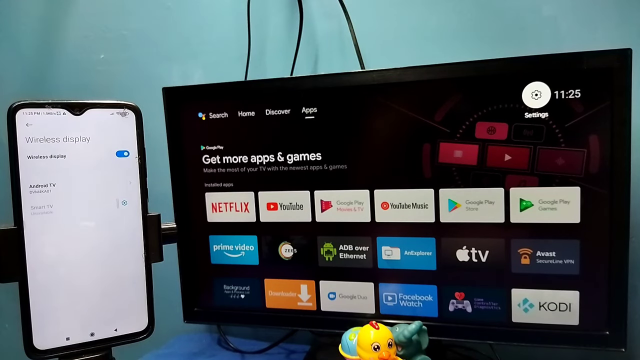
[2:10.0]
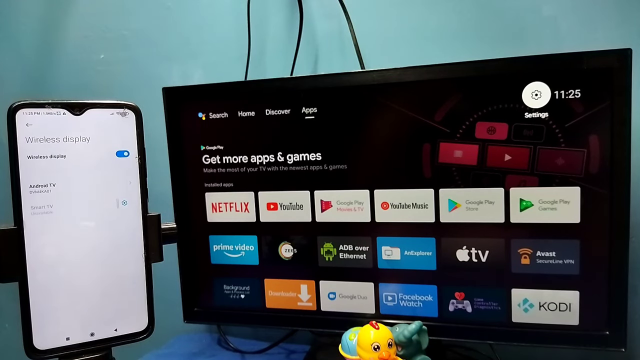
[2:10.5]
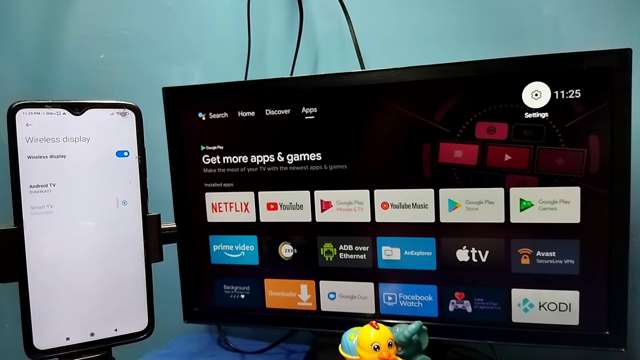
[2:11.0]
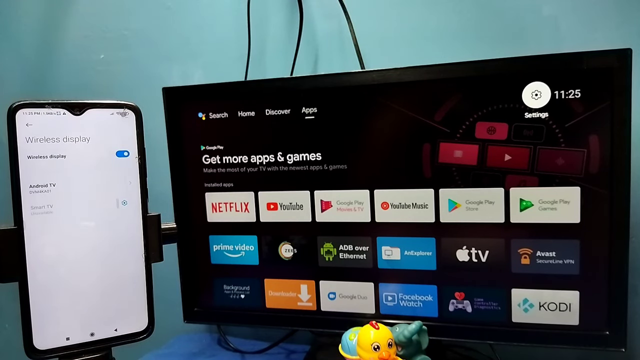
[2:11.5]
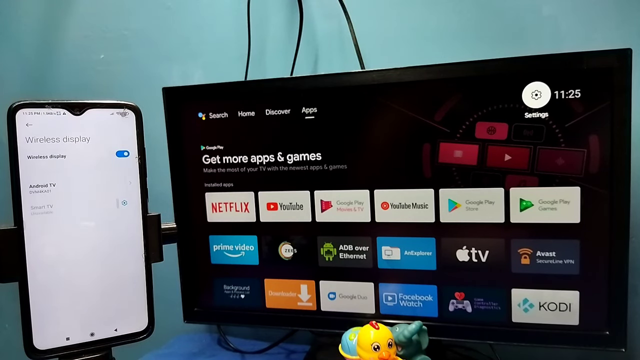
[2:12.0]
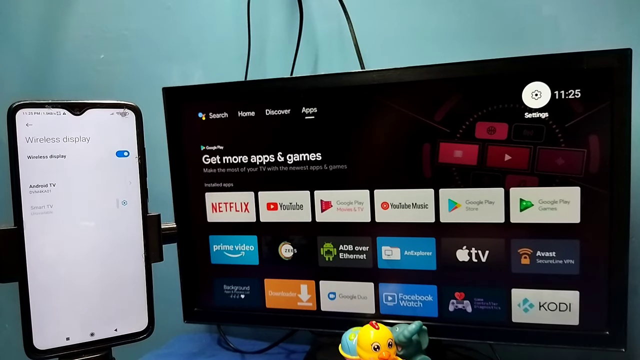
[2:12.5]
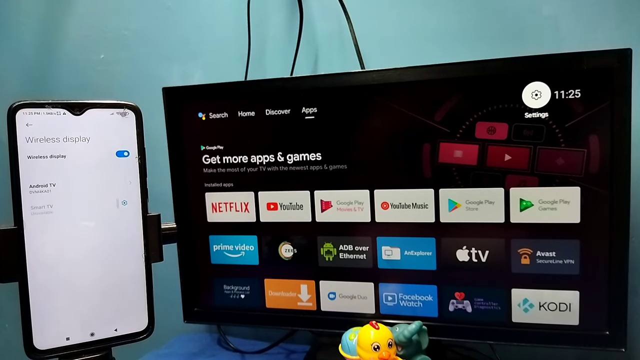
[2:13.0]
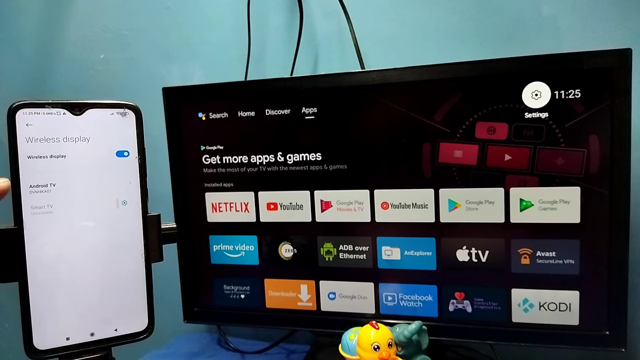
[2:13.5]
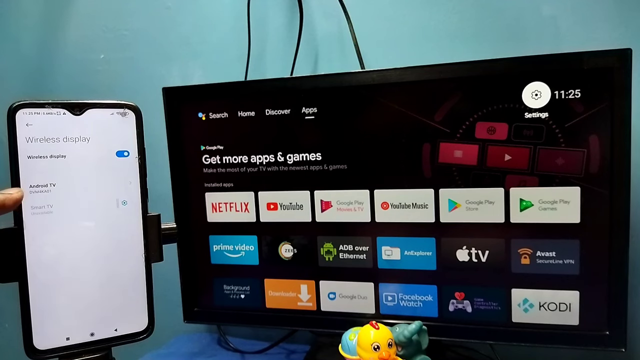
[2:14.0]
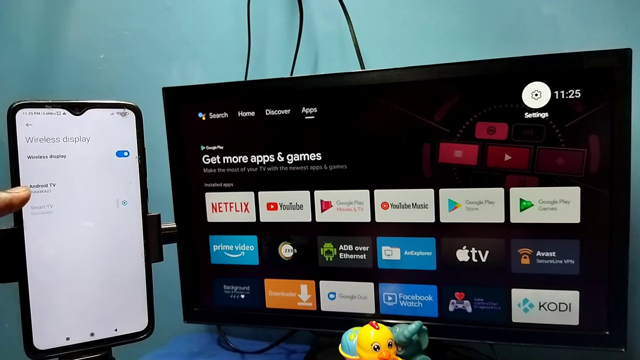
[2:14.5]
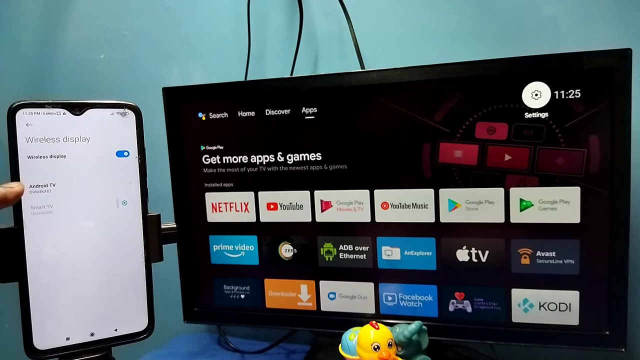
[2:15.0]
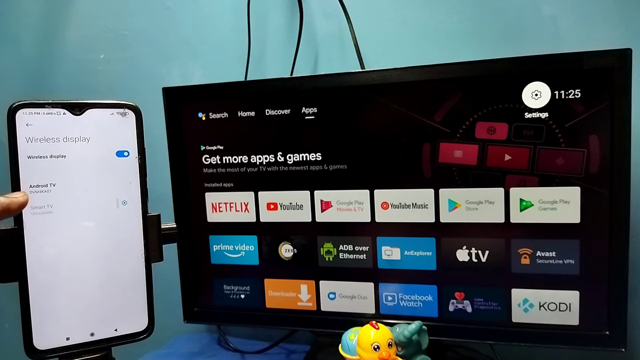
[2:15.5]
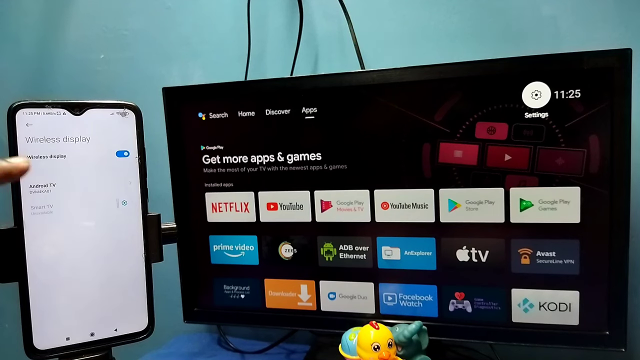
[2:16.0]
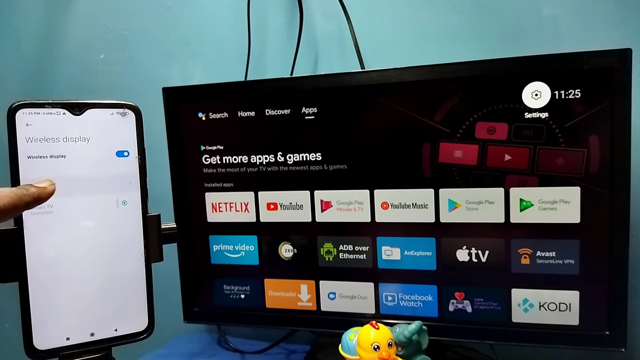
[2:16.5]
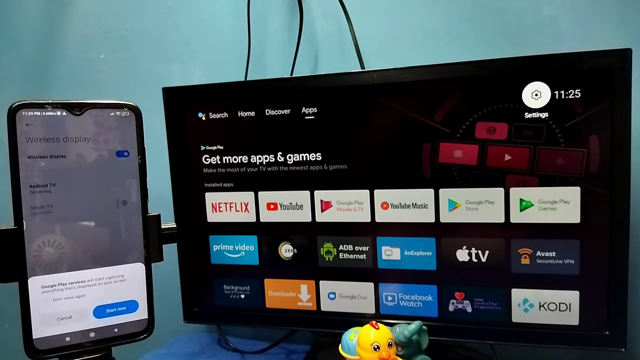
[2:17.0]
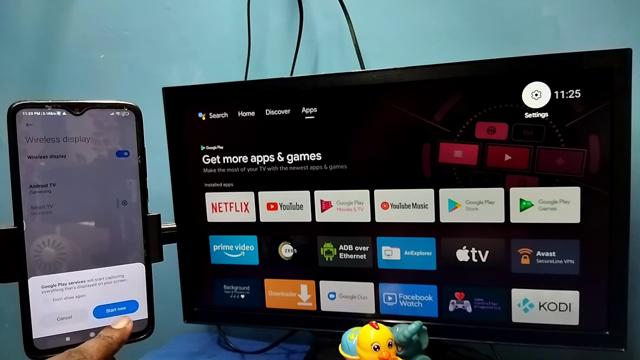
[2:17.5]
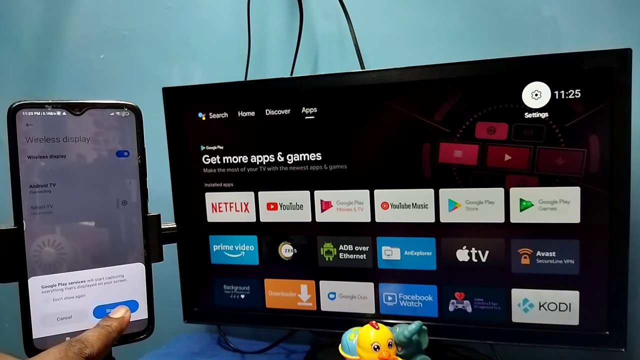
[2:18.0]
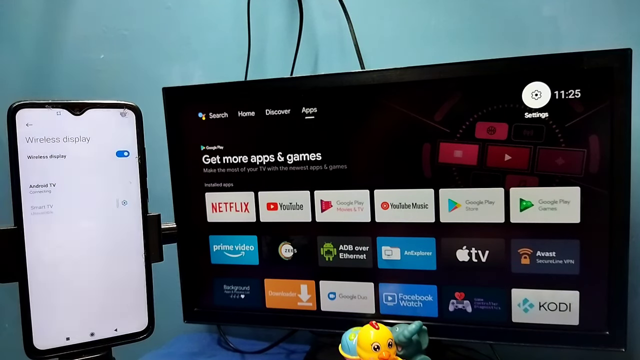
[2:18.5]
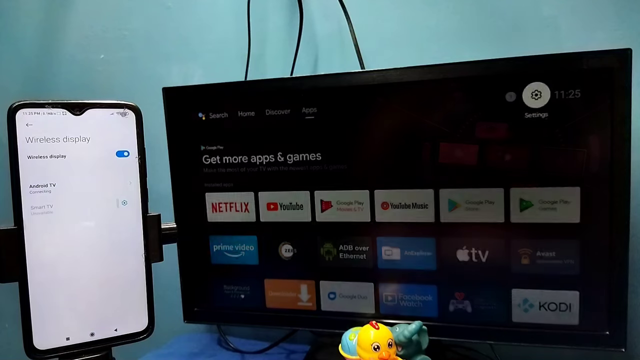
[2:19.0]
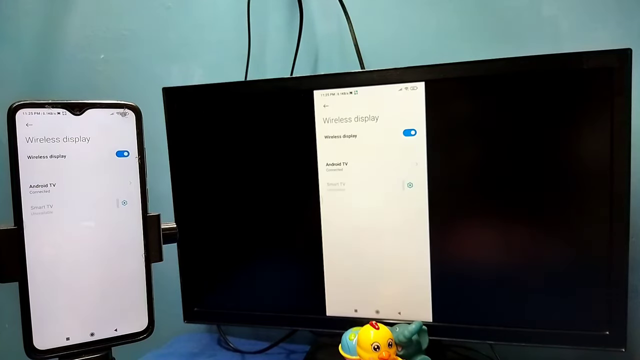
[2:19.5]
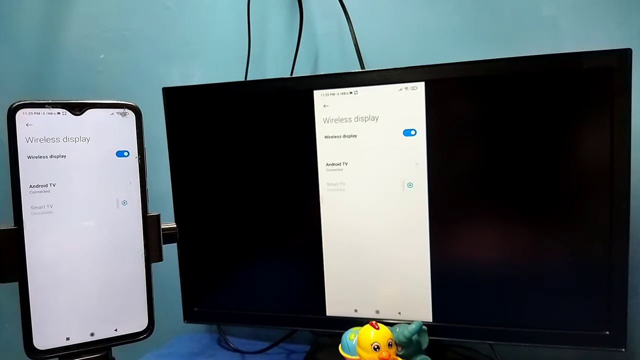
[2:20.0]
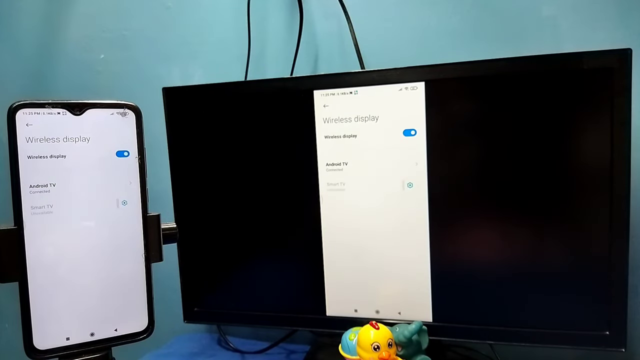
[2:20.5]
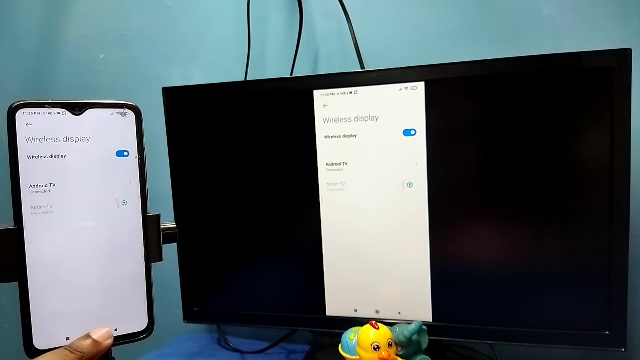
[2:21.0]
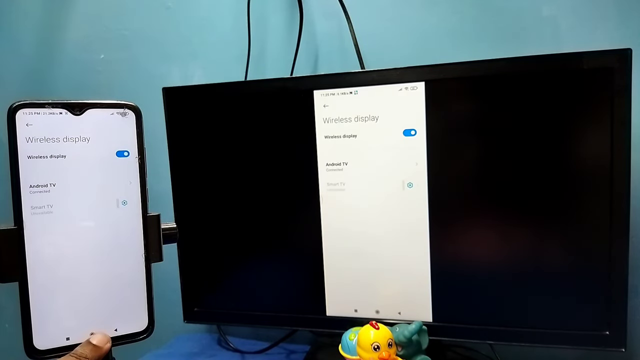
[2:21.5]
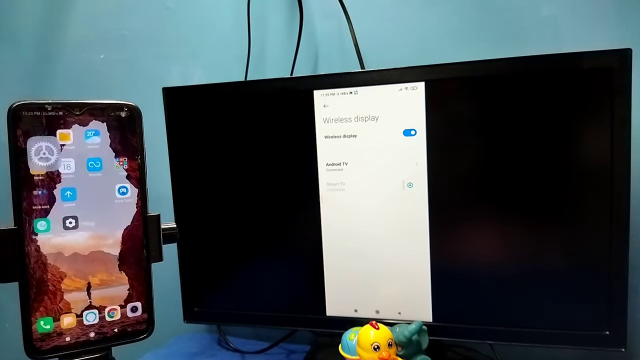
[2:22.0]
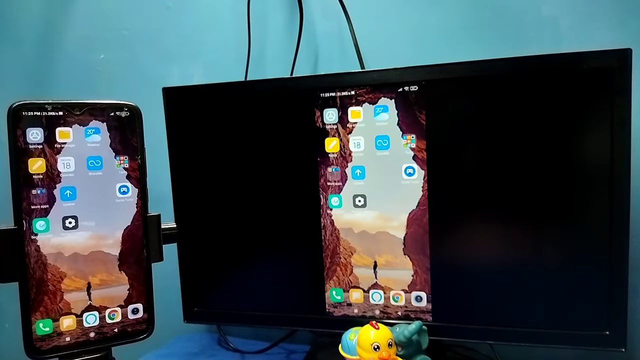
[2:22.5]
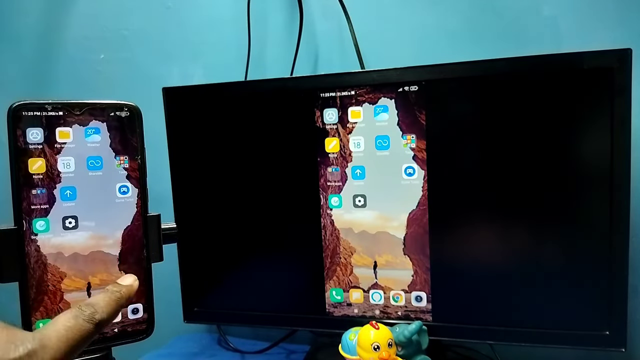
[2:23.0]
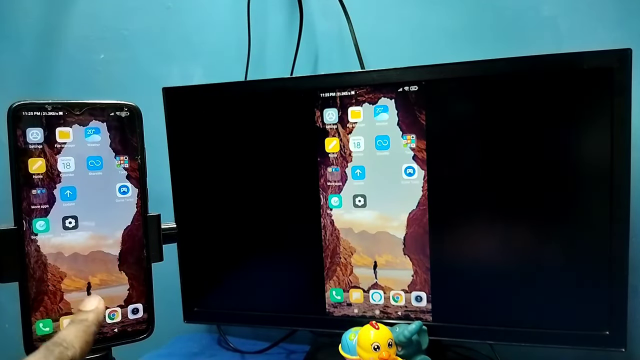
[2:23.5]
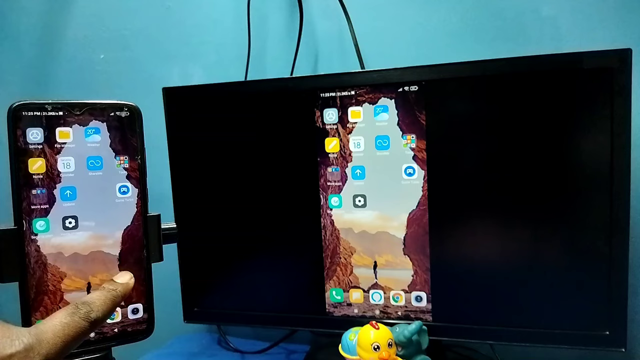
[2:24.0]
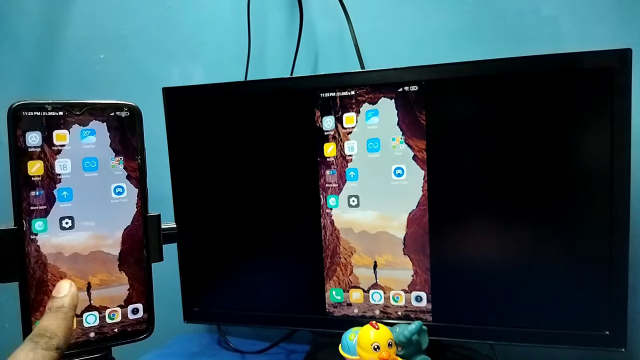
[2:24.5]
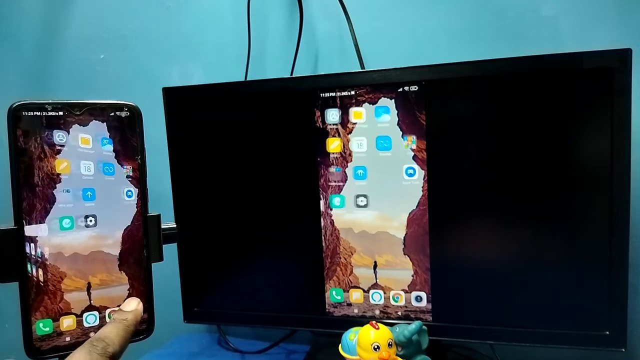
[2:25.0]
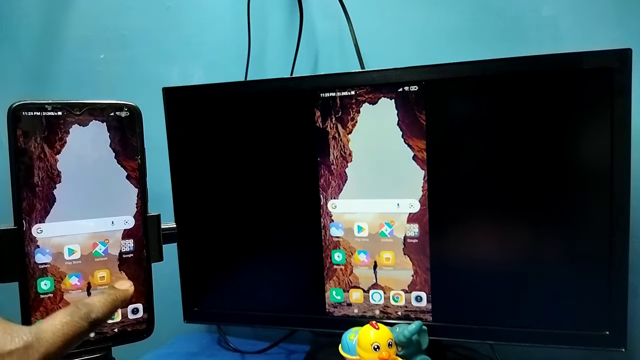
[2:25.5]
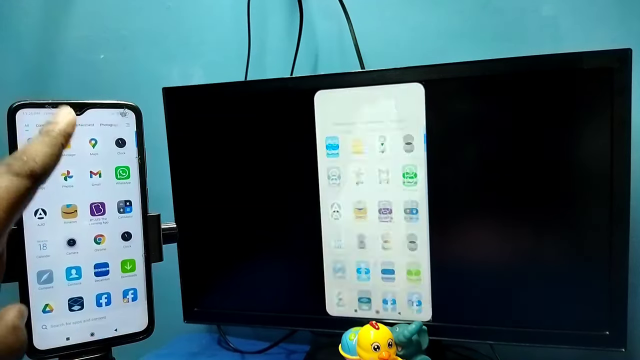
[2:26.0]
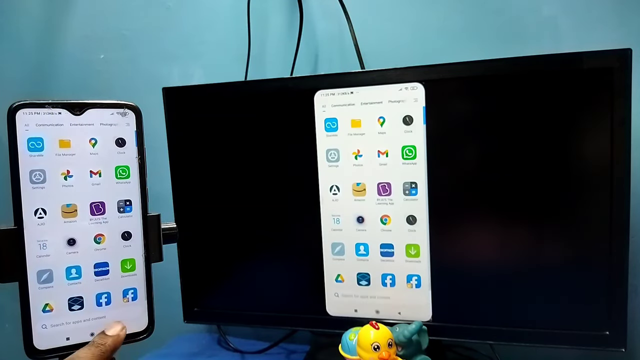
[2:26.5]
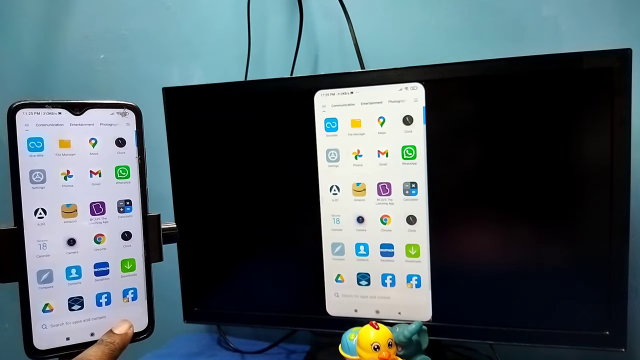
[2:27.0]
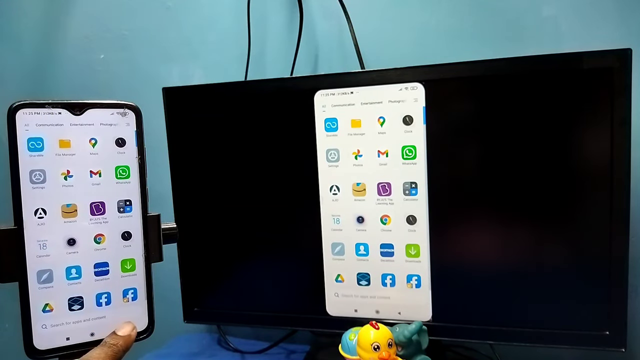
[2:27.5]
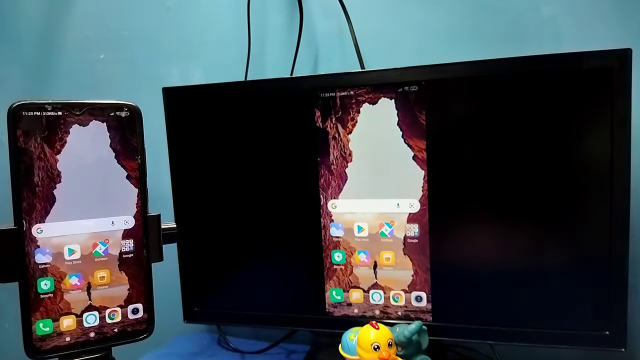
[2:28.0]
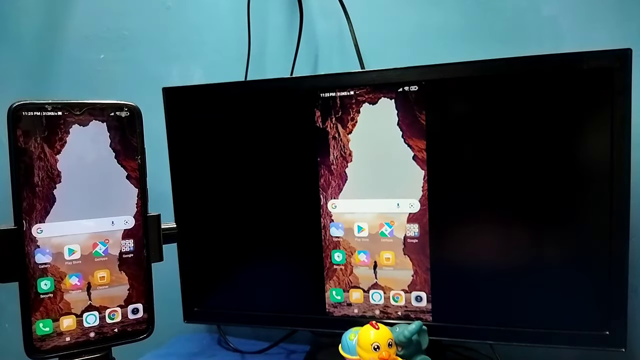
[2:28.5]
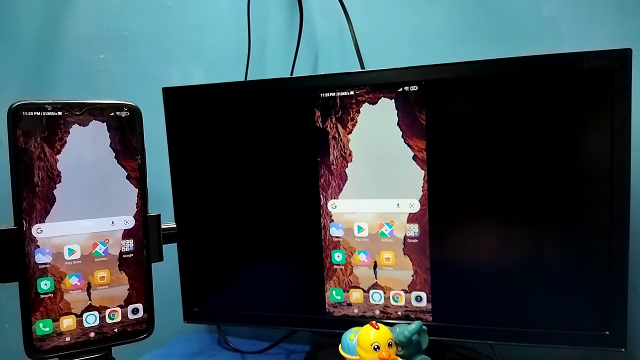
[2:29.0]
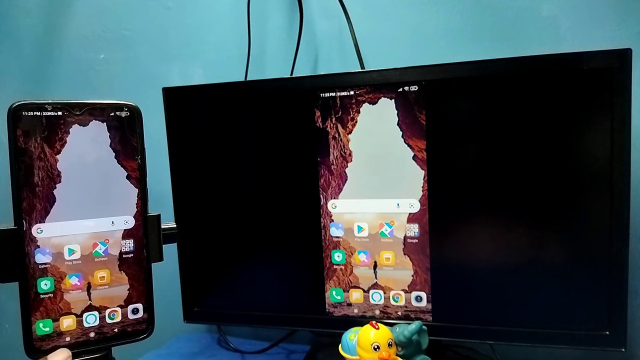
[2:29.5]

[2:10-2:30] The wireless display page is on the cell phone screen; they touch something and it clears, and then the wireless display shows on the flat screen, followed by all of the different apps on the flat screen. Touching the cell phone moves through pages and apps, which are mirrored on the flat screen.